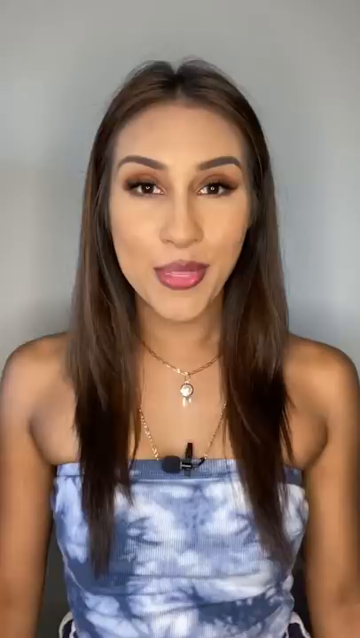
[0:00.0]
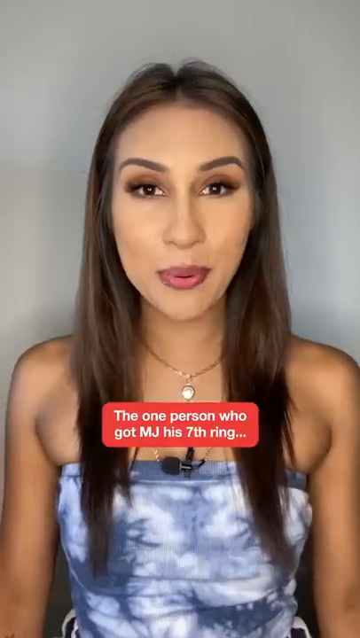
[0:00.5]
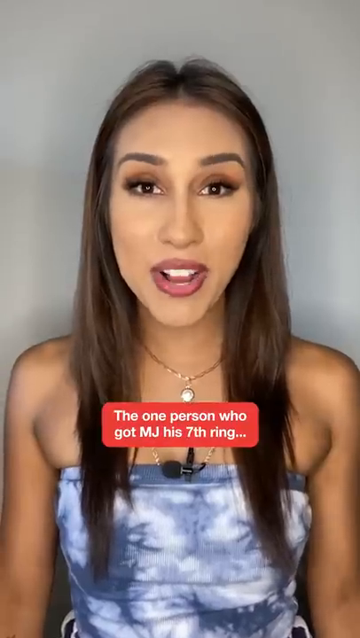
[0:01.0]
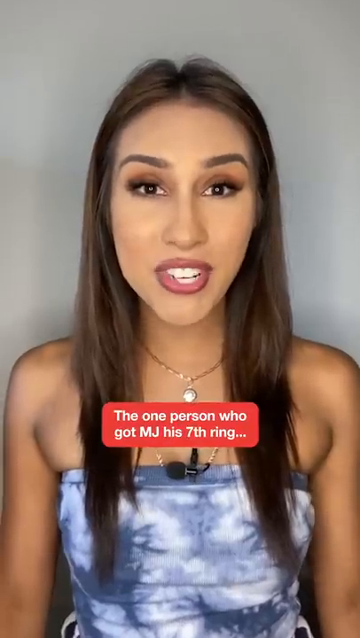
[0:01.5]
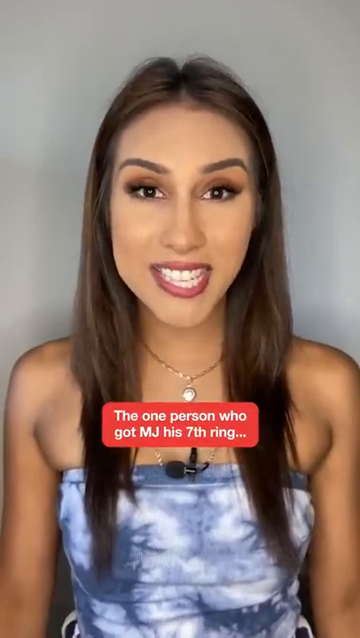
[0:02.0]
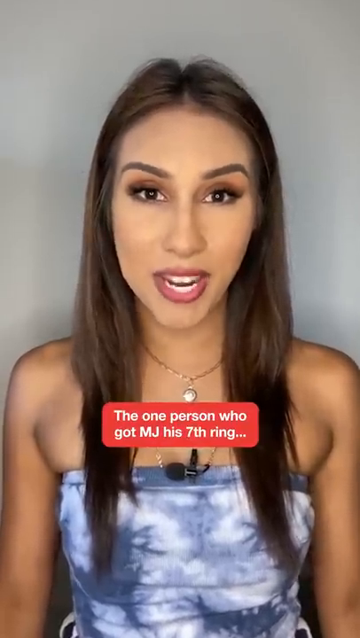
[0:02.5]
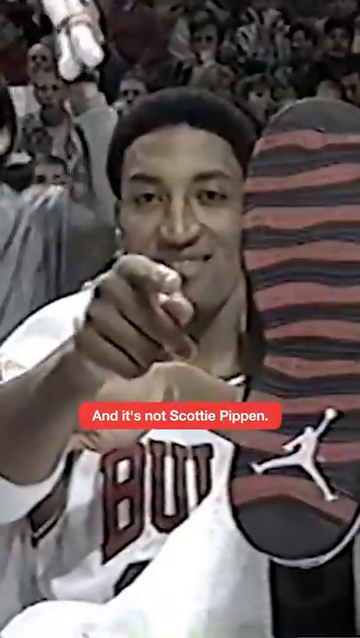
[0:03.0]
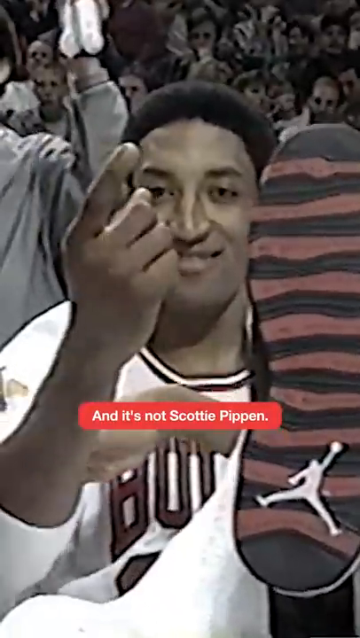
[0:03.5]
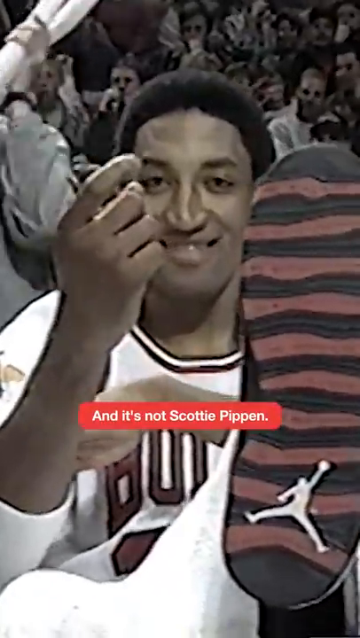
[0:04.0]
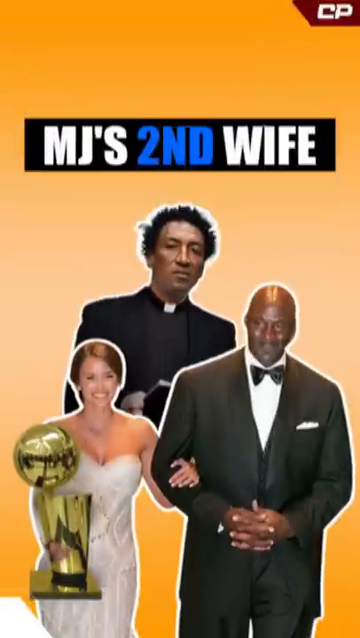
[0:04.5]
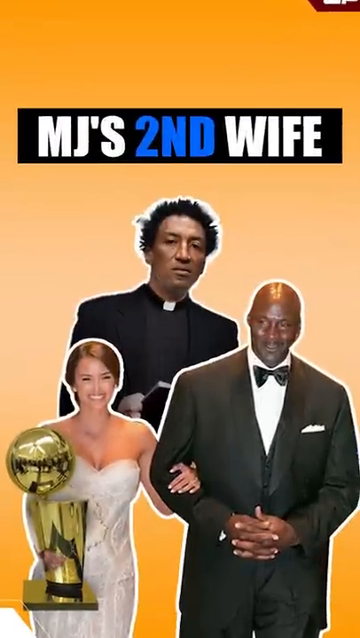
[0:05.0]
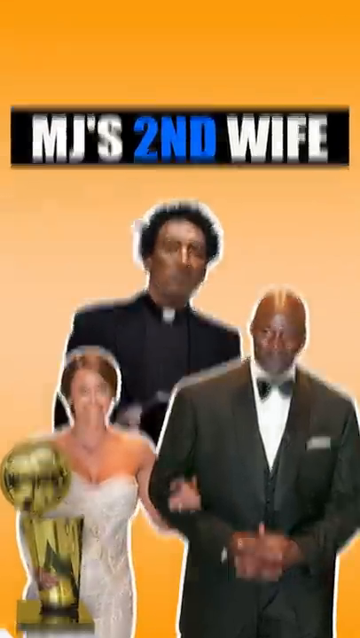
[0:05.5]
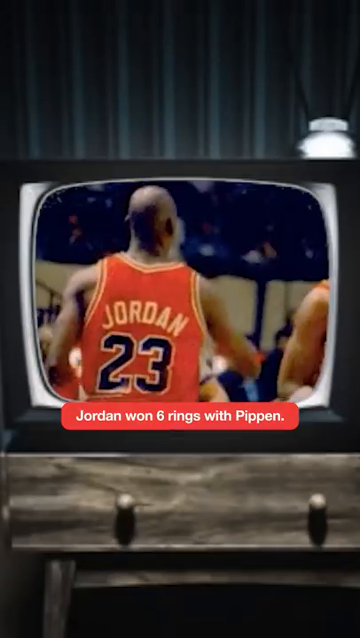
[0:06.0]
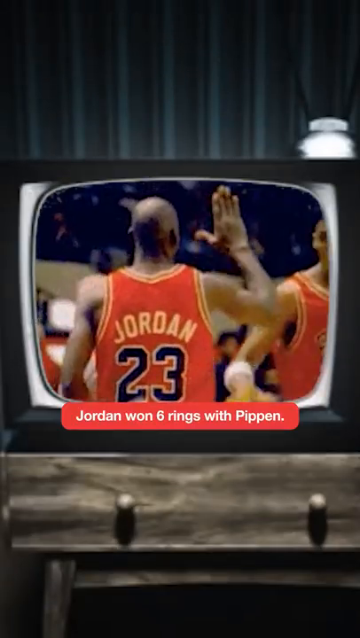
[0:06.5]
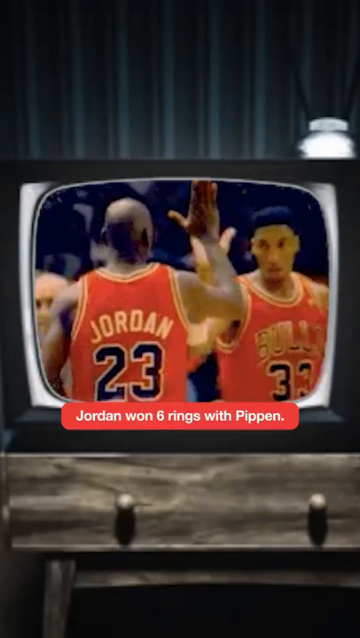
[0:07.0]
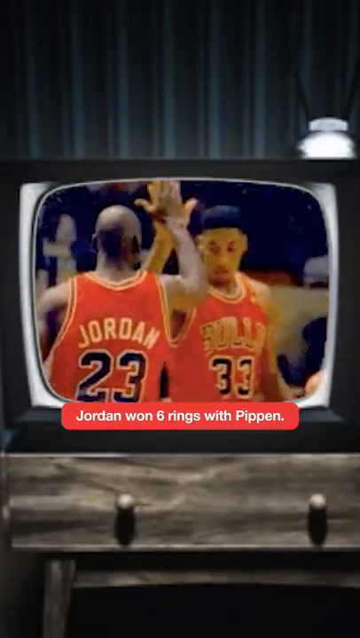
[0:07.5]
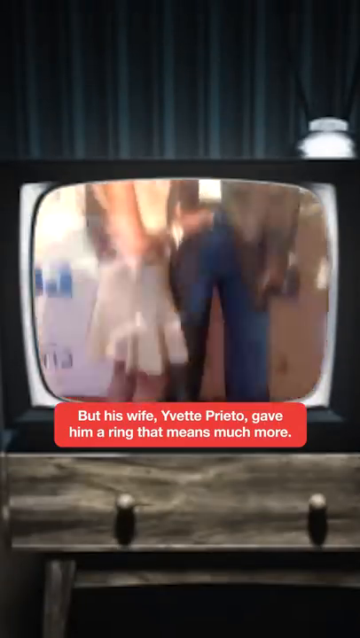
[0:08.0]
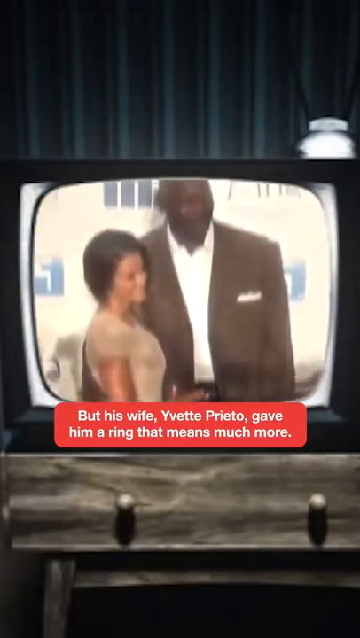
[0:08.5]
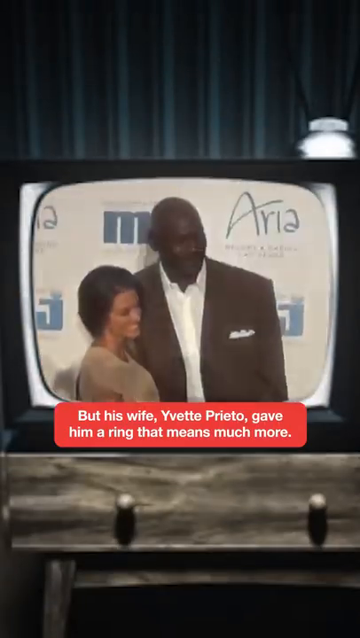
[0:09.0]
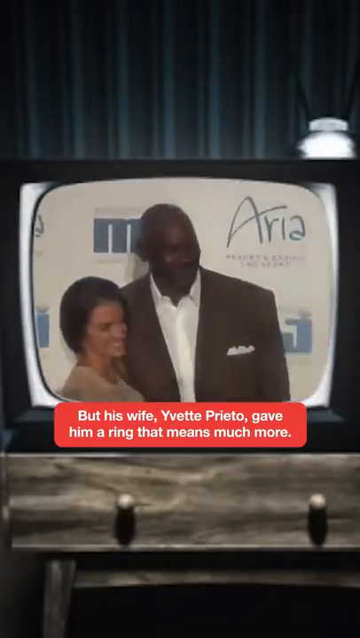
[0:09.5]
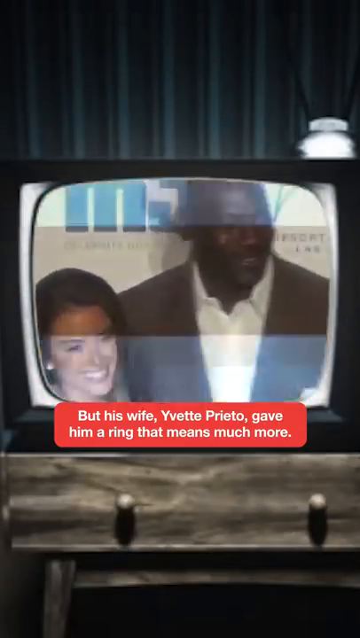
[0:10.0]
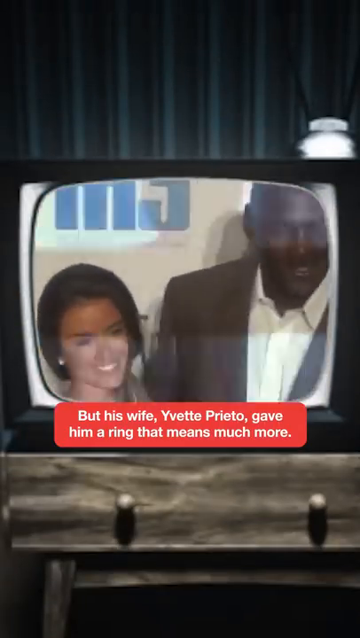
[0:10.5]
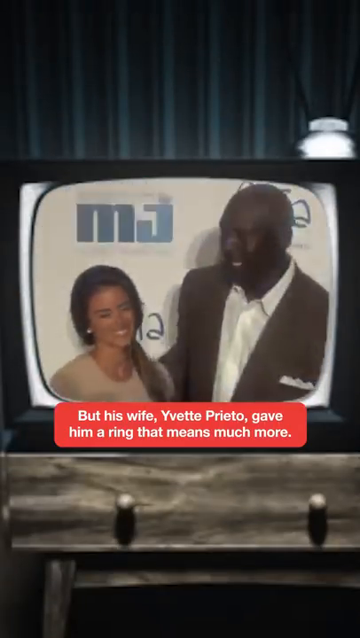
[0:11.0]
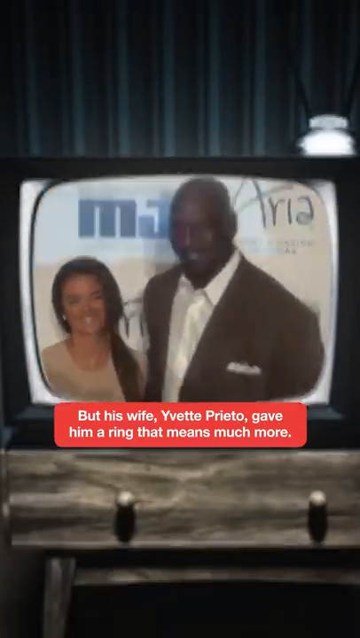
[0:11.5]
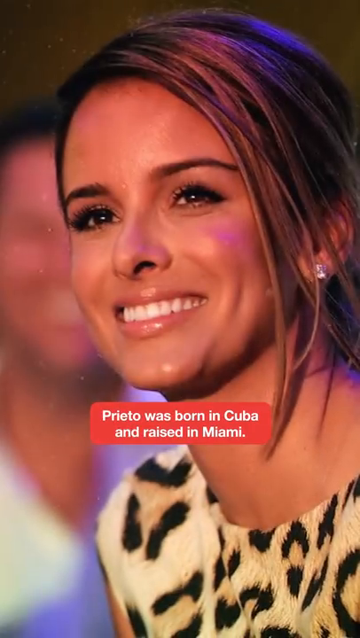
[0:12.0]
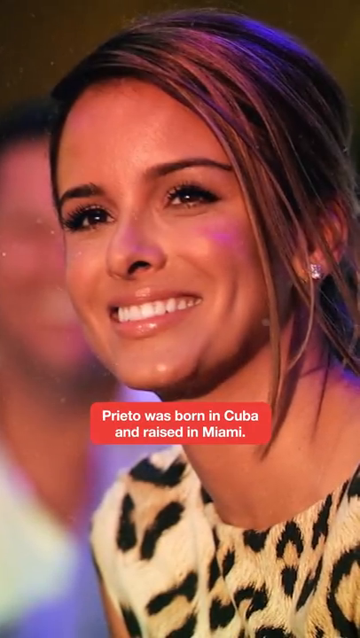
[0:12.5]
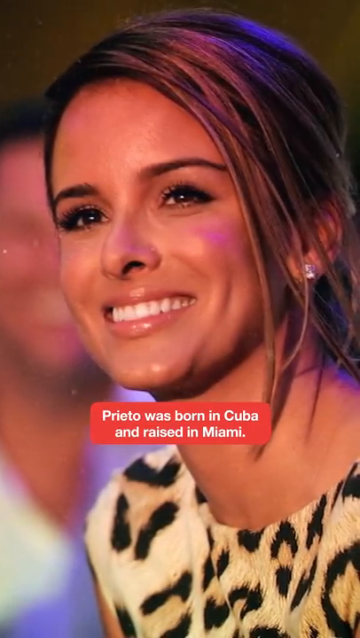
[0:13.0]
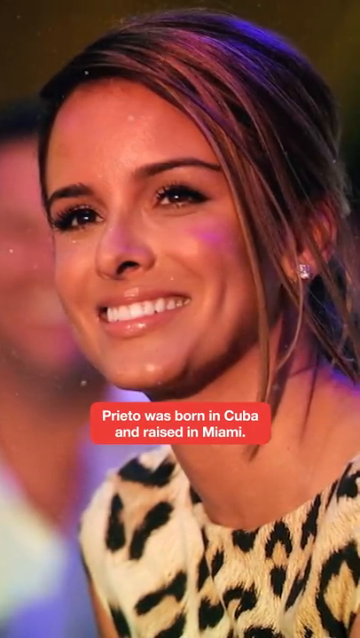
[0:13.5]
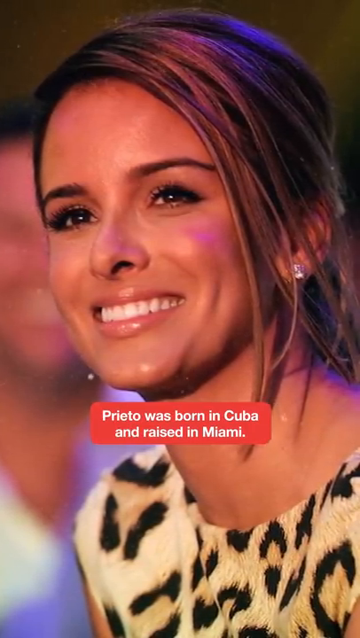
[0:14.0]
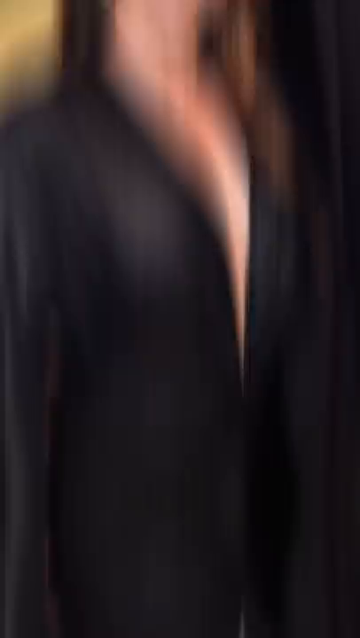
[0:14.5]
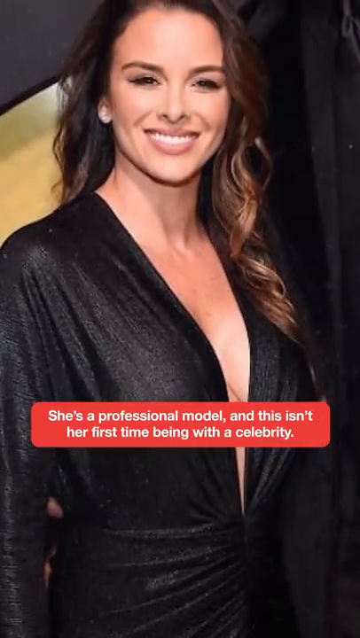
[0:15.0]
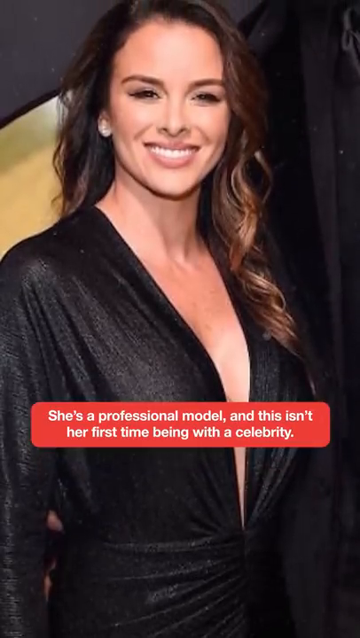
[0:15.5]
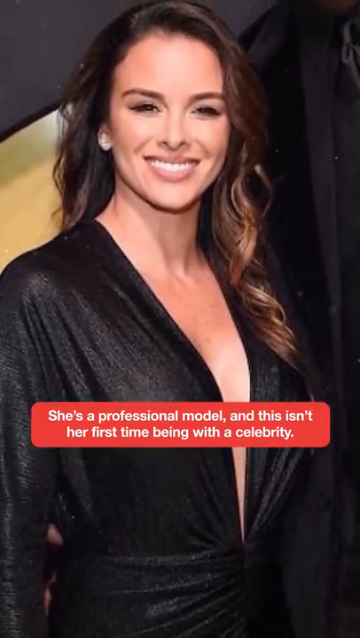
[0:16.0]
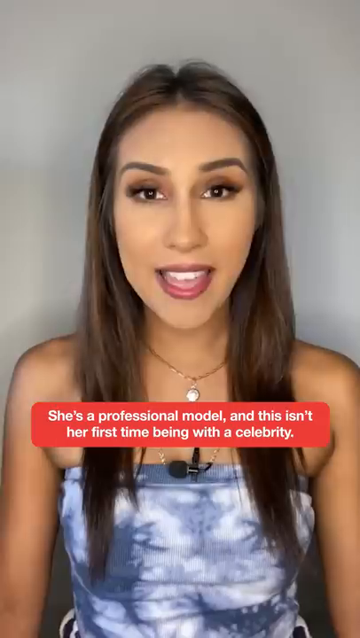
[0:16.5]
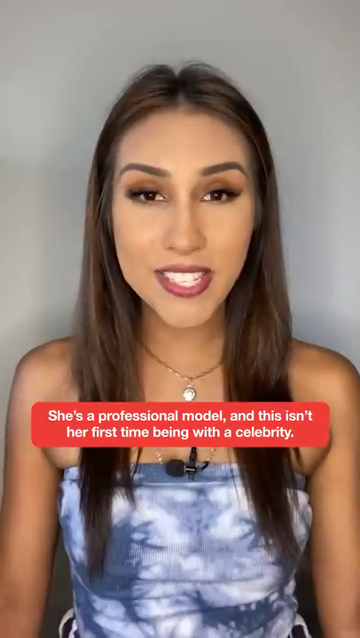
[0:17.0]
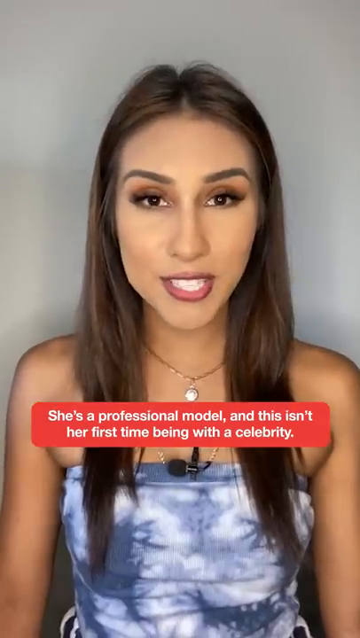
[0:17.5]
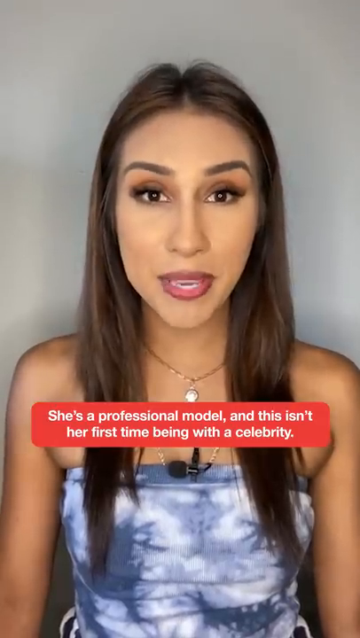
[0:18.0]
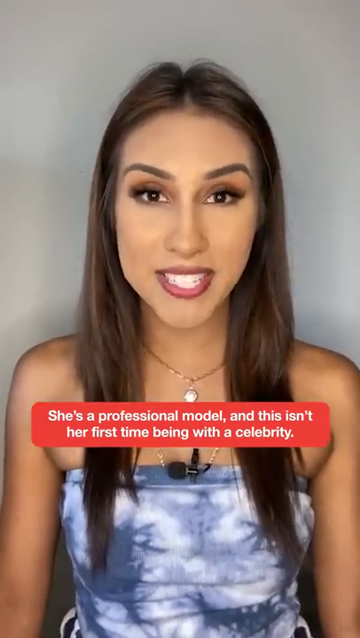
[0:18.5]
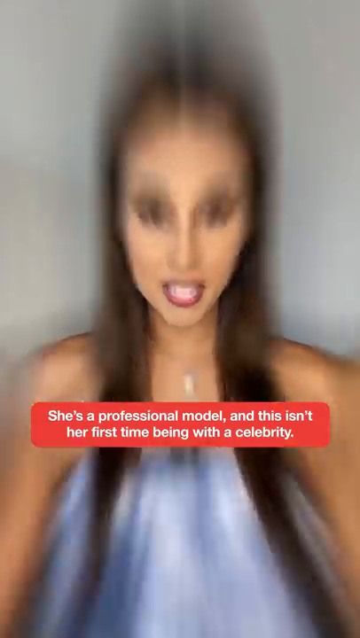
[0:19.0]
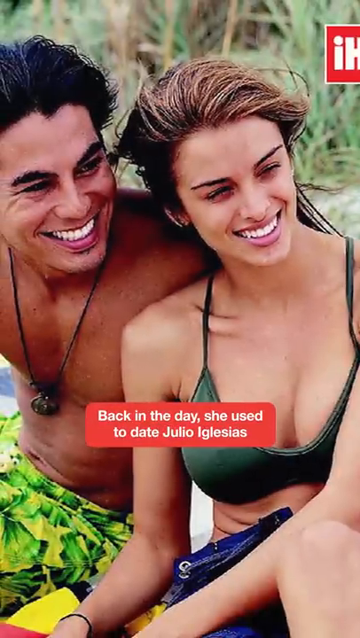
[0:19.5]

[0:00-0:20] A white woman with long hair and a purple top appears to be making a video in which she talks about Michael Jordan's wife, Yvette Pareto. Yvette is then shown with Michael Jordan at some type of award ceremony, where he seems to be being acknowledged and she stands up there by his side.